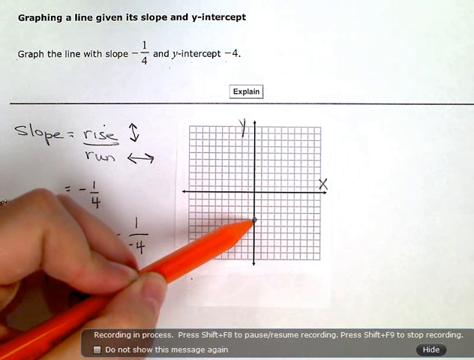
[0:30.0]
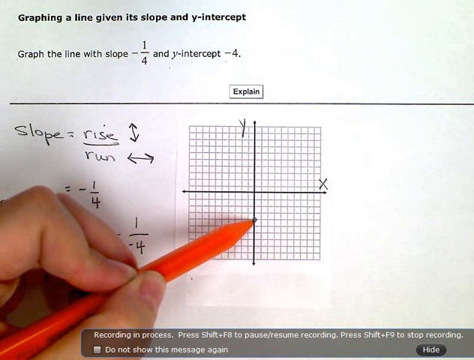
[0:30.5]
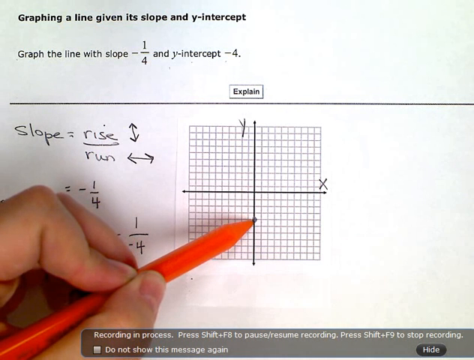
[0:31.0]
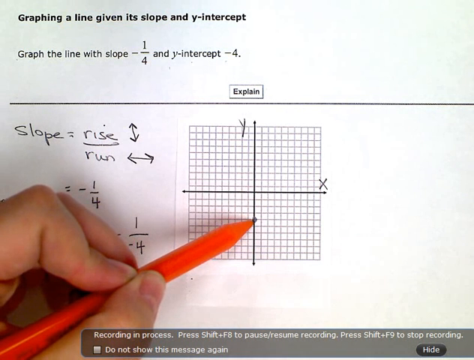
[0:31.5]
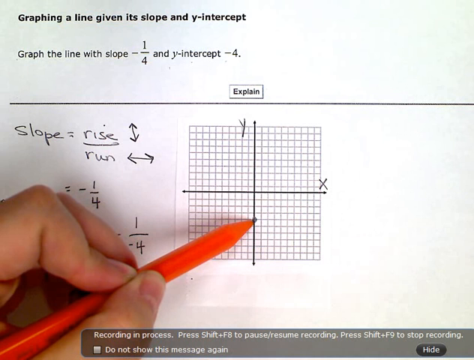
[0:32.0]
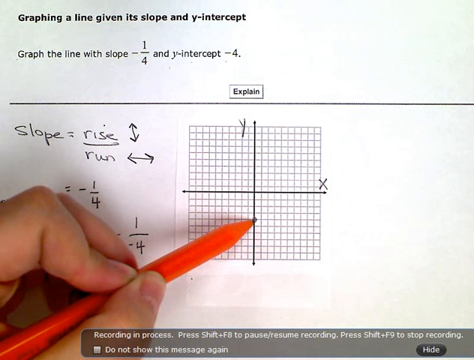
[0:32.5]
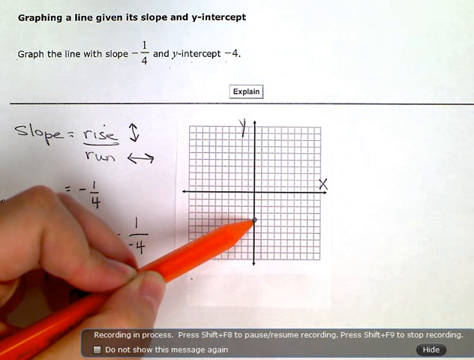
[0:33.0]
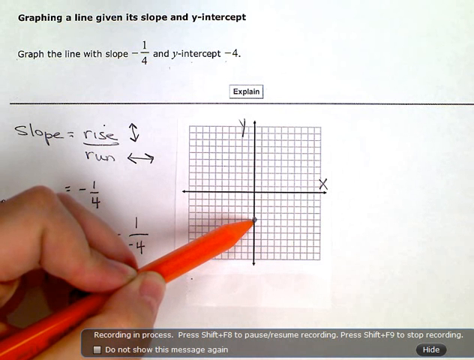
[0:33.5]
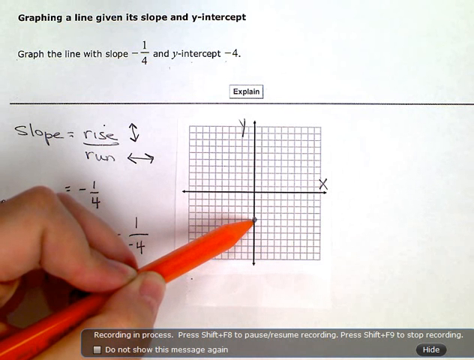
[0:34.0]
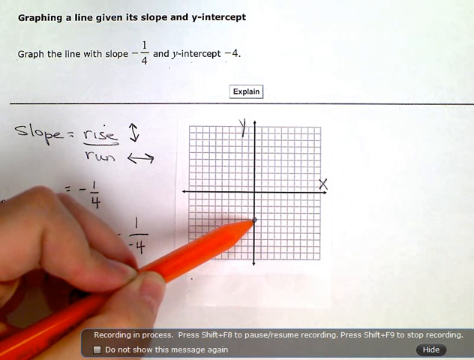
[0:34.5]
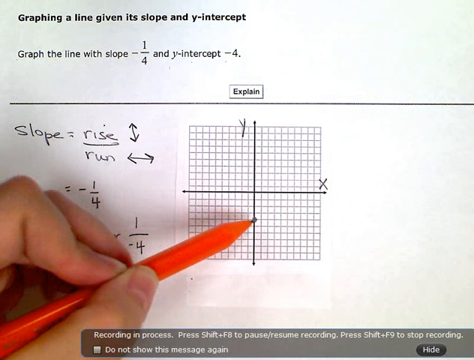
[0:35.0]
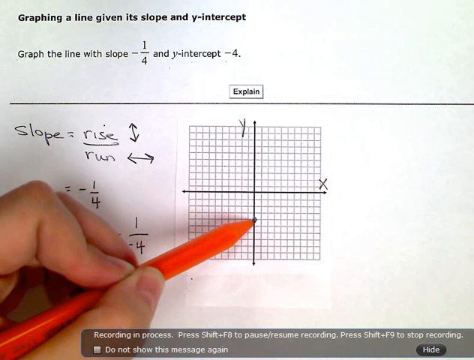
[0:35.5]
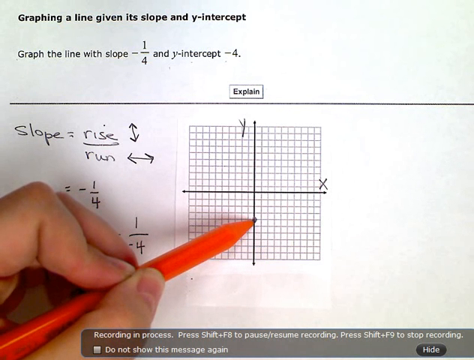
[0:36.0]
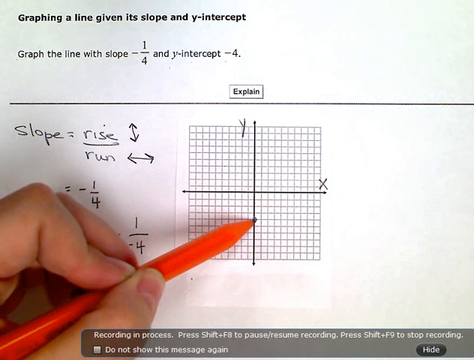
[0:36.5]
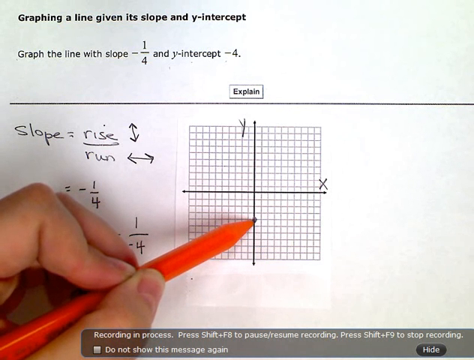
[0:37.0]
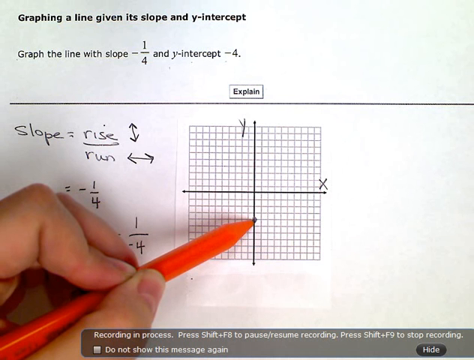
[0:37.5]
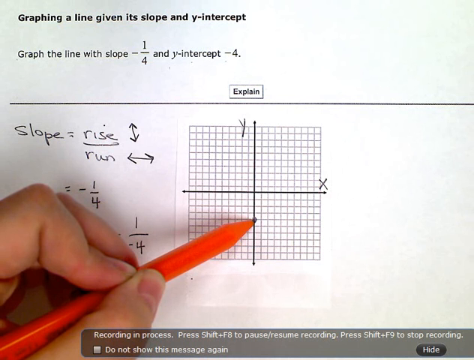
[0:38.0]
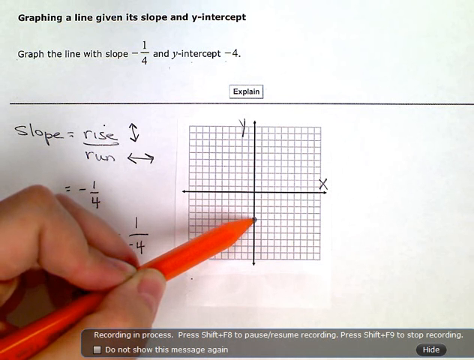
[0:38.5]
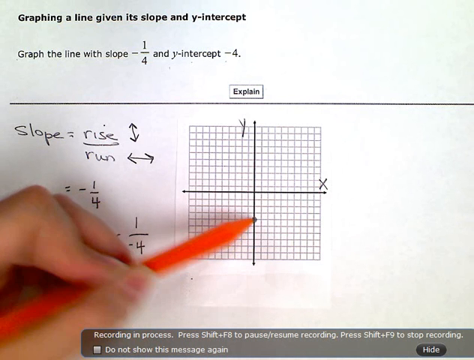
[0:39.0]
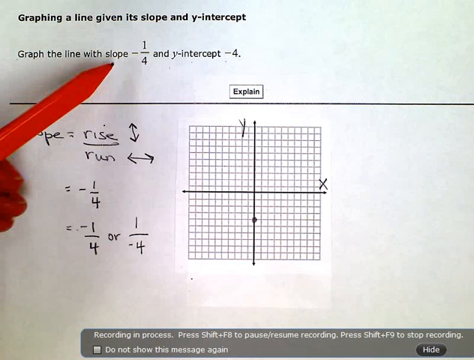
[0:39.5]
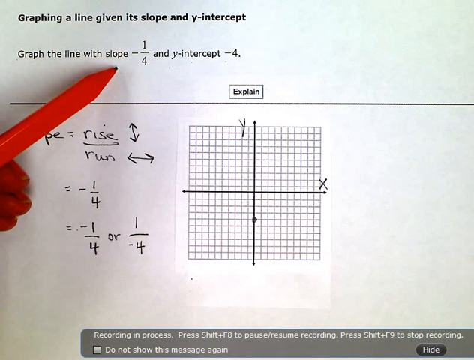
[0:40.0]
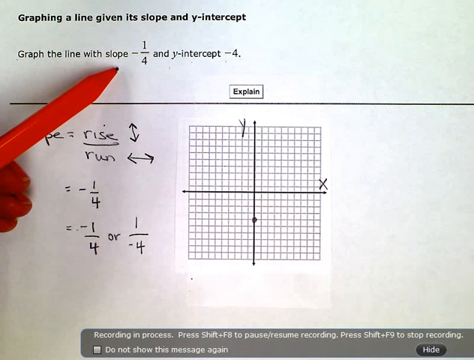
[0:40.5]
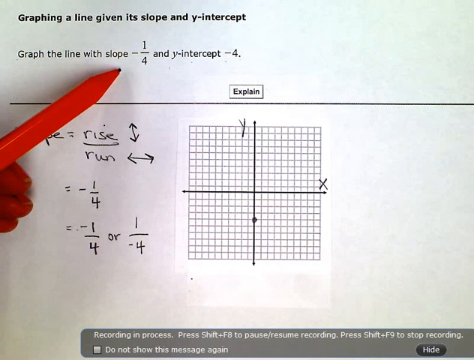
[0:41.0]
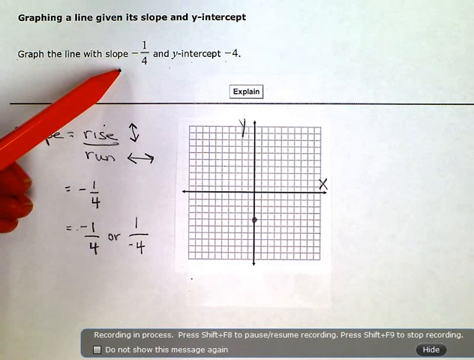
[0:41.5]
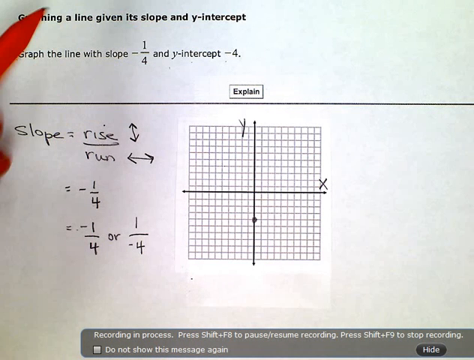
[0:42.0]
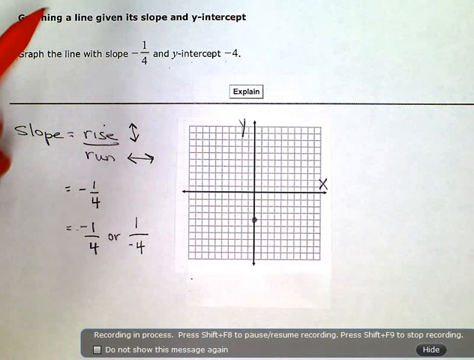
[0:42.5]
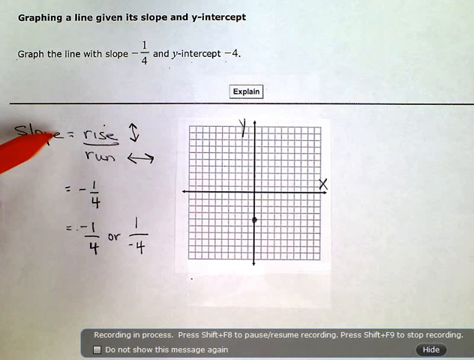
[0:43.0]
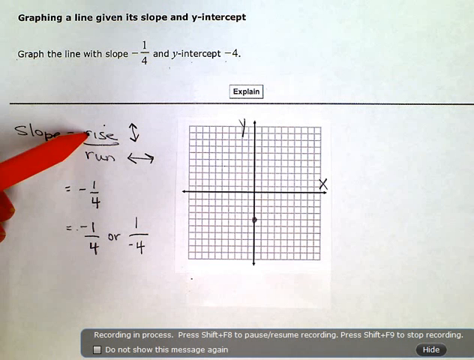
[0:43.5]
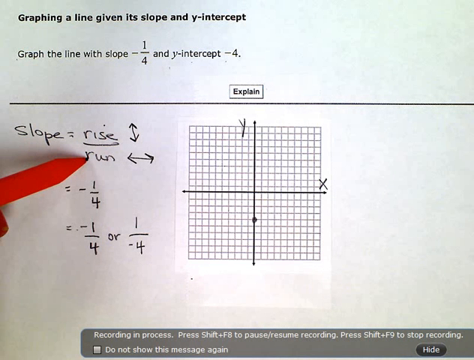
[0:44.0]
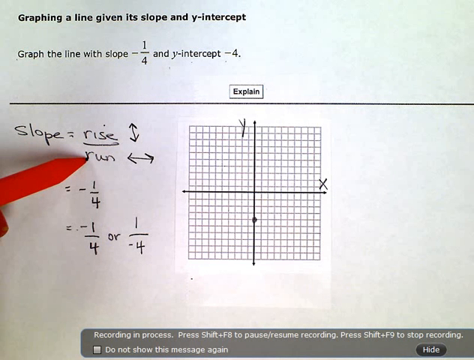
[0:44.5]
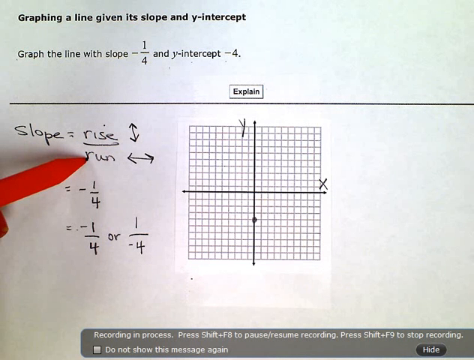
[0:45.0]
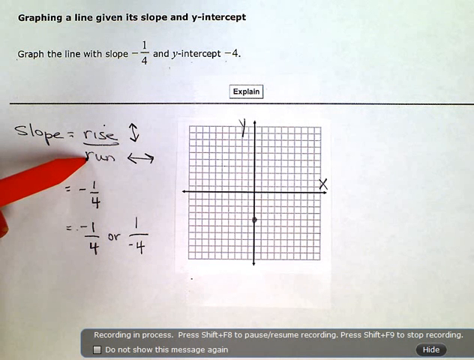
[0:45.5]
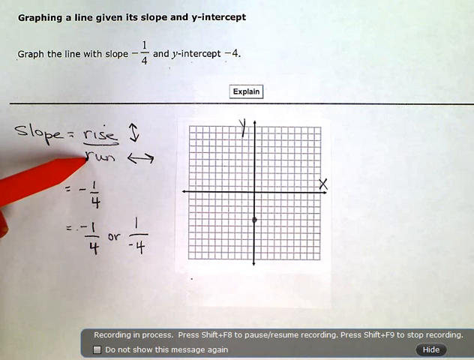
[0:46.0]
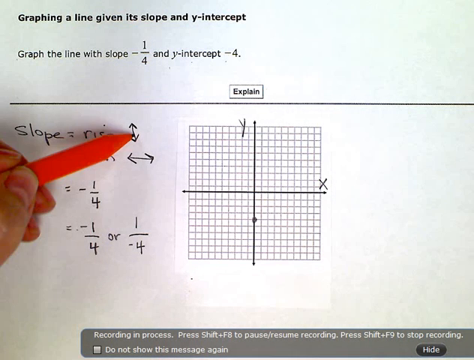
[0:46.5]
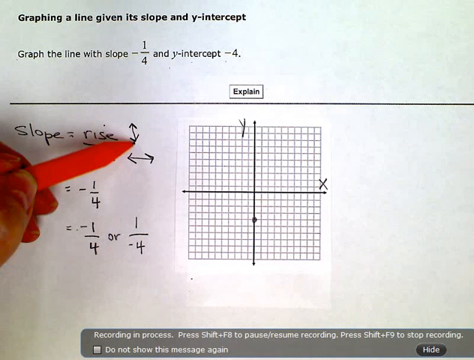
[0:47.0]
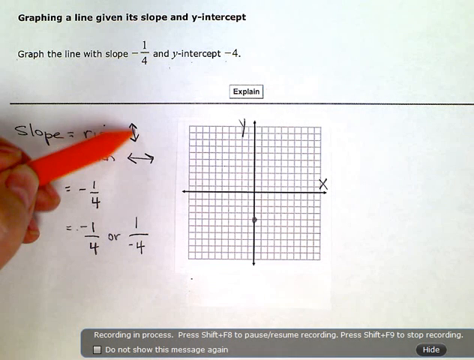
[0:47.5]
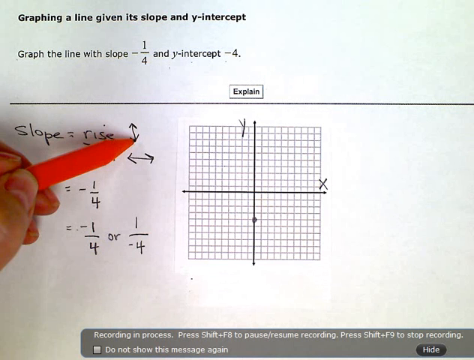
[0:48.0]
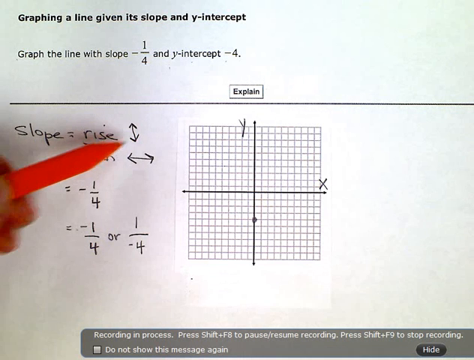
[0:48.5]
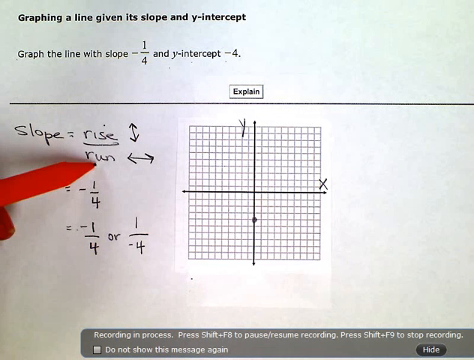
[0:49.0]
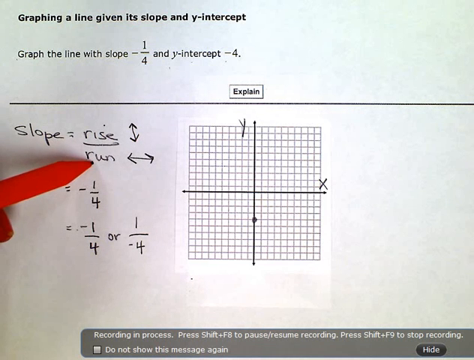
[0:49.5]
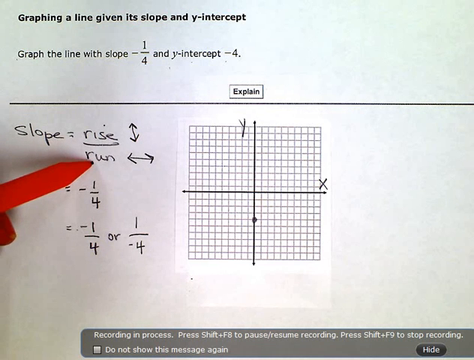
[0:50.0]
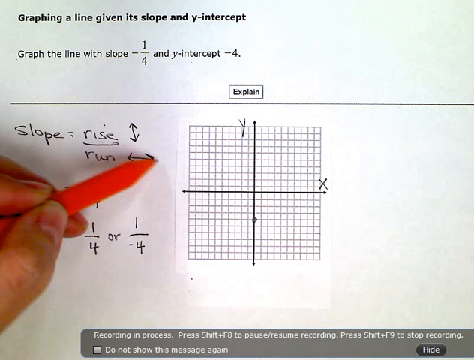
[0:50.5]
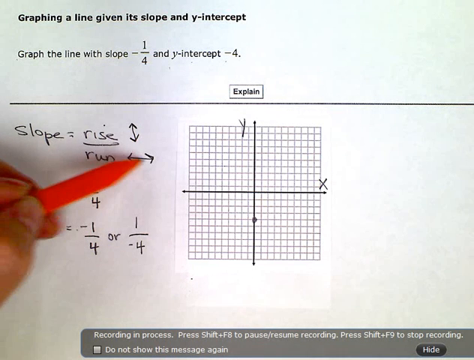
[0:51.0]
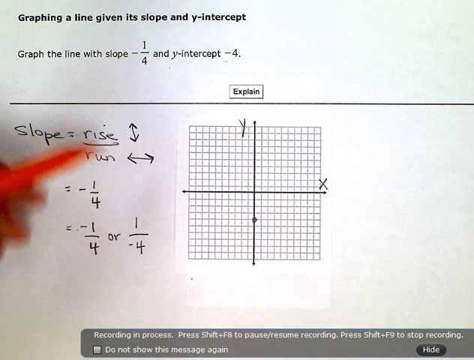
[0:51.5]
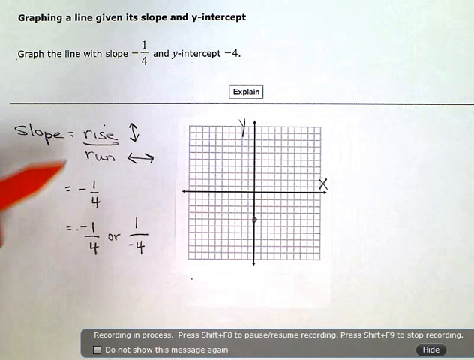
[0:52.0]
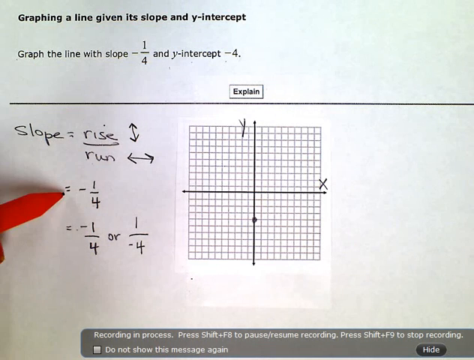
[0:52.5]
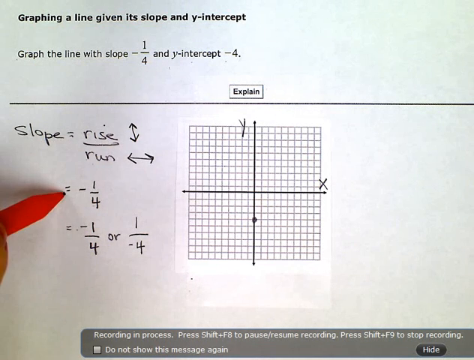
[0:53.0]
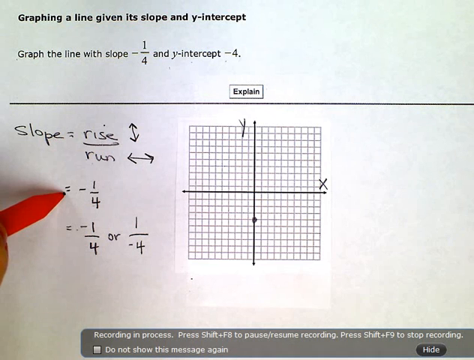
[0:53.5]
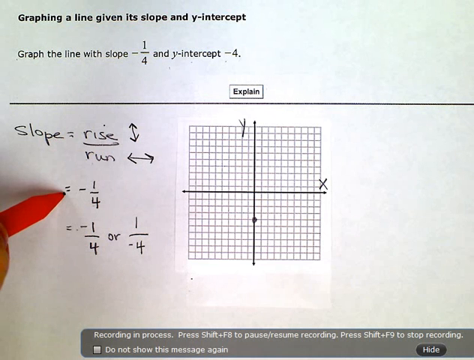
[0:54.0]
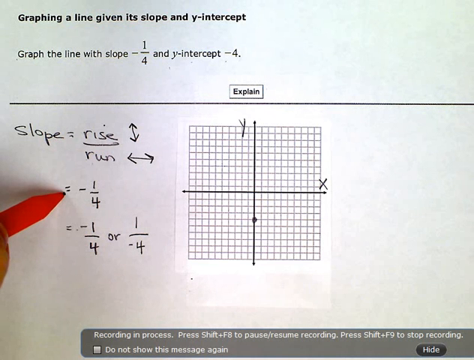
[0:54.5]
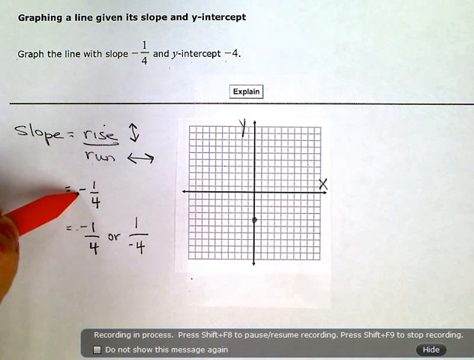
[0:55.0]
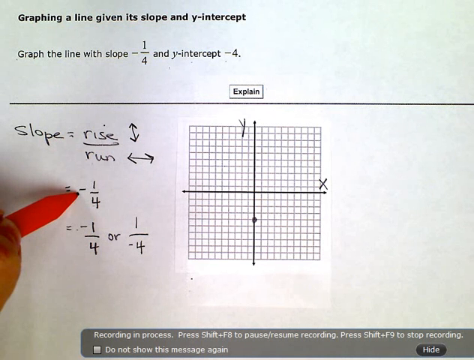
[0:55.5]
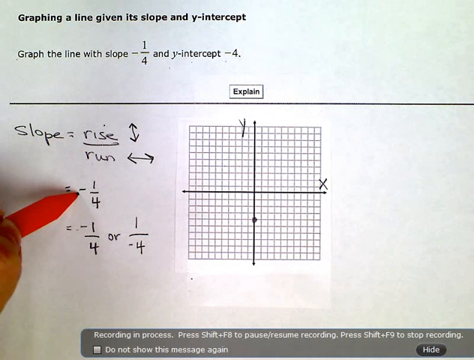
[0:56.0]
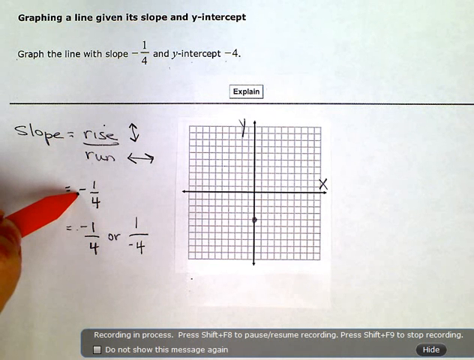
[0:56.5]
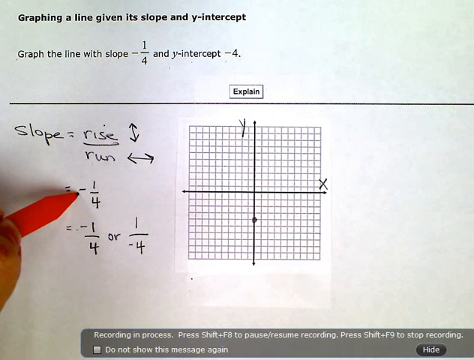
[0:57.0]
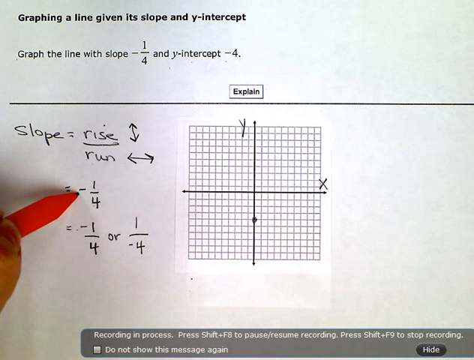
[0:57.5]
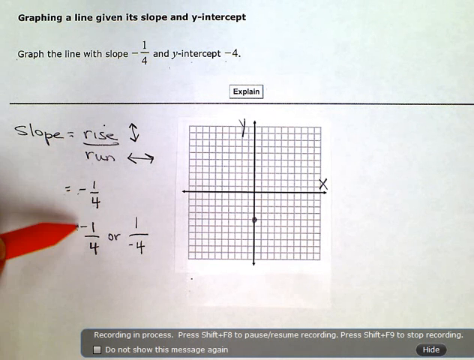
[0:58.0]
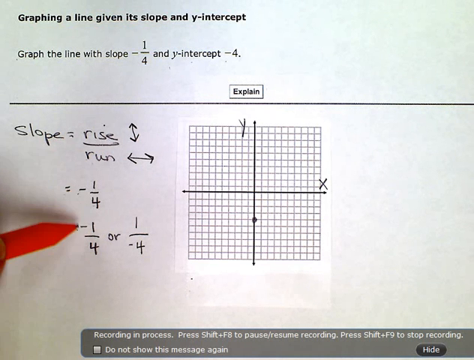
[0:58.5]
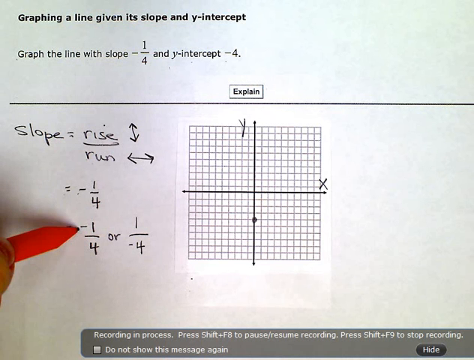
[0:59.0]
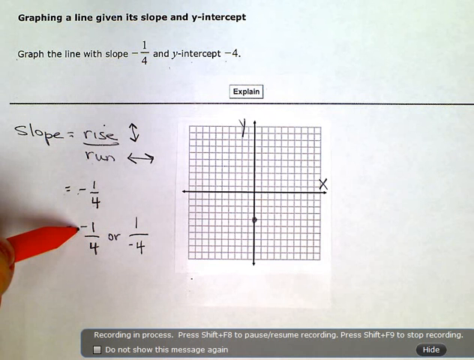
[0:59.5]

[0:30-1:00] The instructor keeps pointing at the grid at the bottom of the screen, holding still for quite a few seconds before moving. They point toward the dot, possibly showing the solution to the problem with the 1, 4 and a y-intercept of negative 4. On the left side of the screen they point toward a formula reading "Syllable equals rise over run," with two sets of arrows, one going left and right and one going up and down. They appear to be using this as a separate example of the x- and y-axis, probably showing that the rise is up and down and the run is left and right.